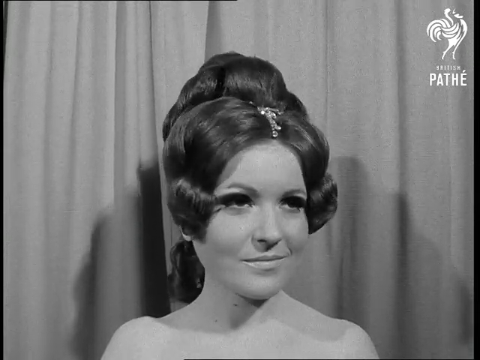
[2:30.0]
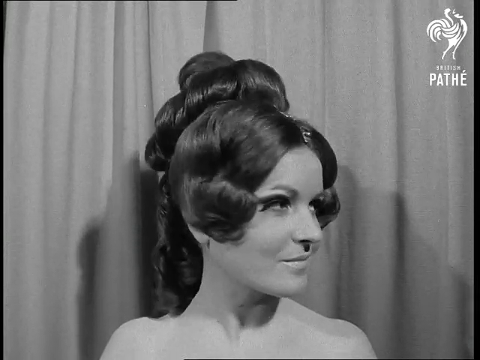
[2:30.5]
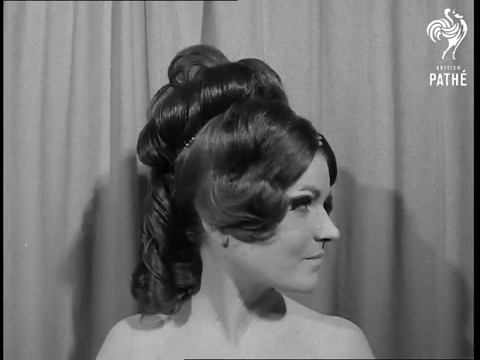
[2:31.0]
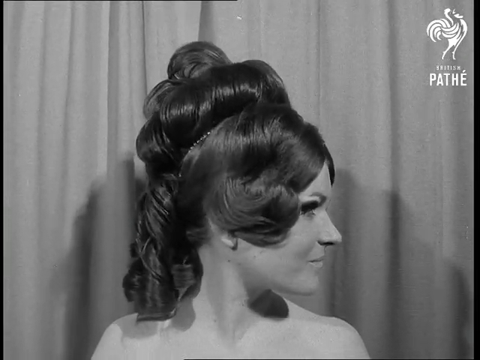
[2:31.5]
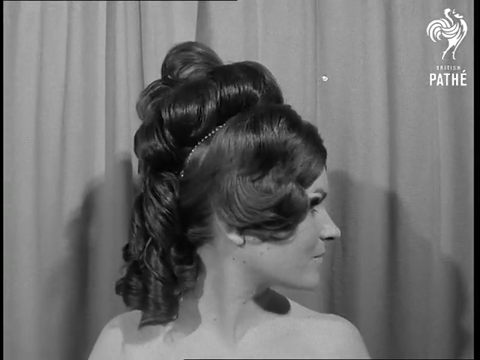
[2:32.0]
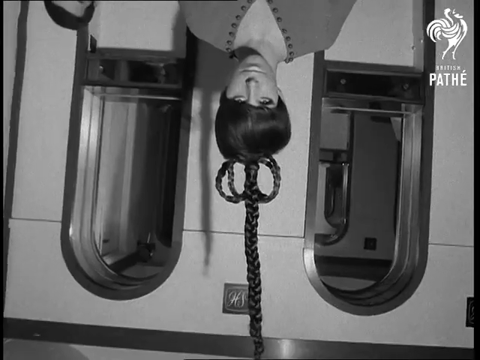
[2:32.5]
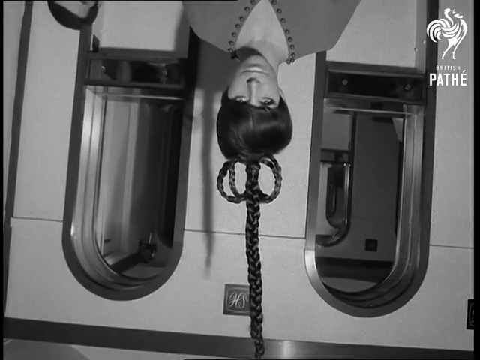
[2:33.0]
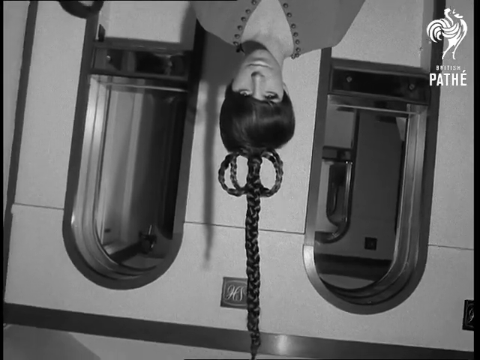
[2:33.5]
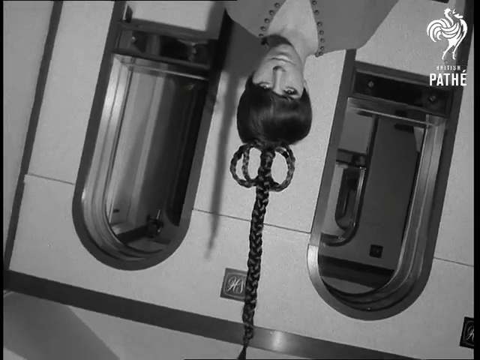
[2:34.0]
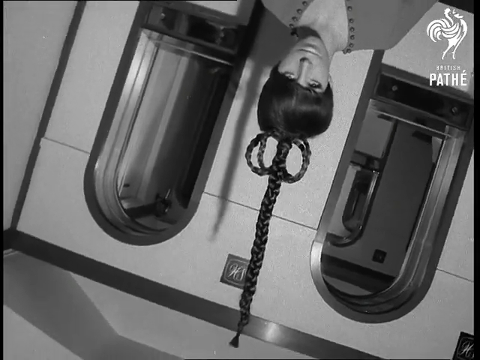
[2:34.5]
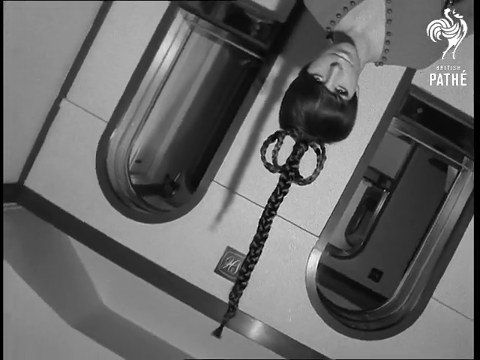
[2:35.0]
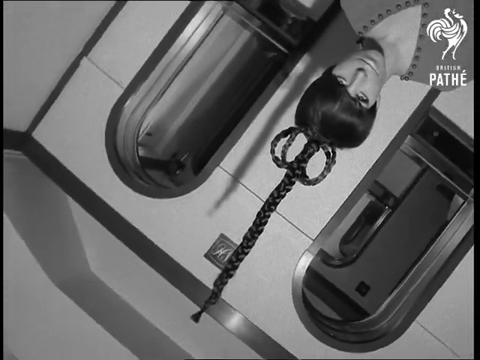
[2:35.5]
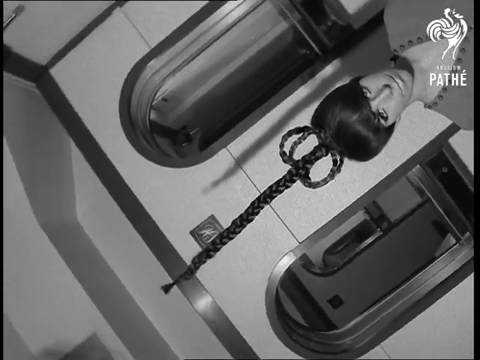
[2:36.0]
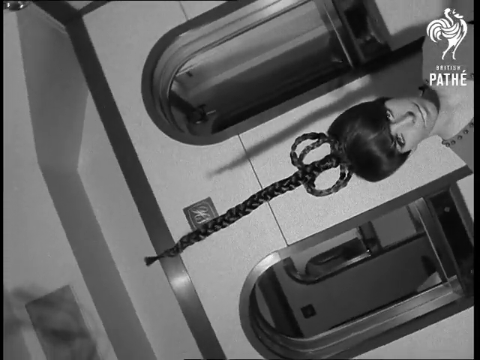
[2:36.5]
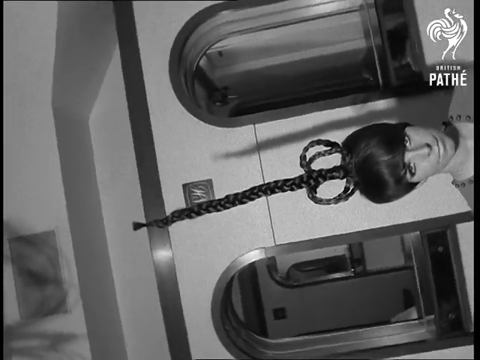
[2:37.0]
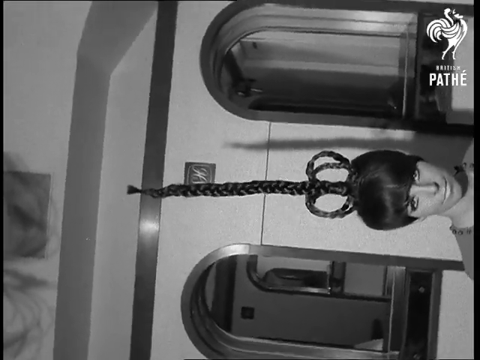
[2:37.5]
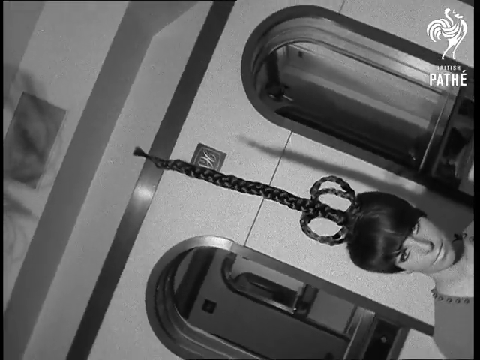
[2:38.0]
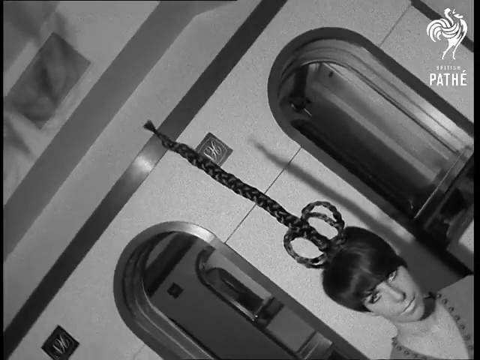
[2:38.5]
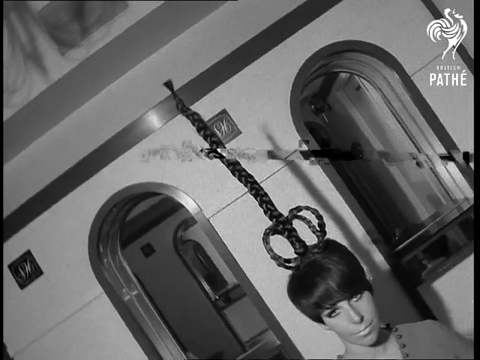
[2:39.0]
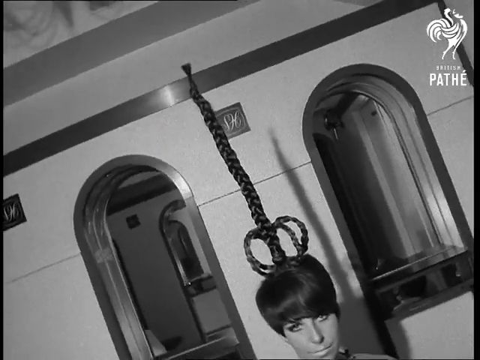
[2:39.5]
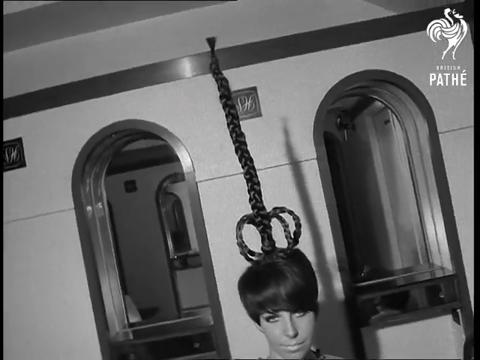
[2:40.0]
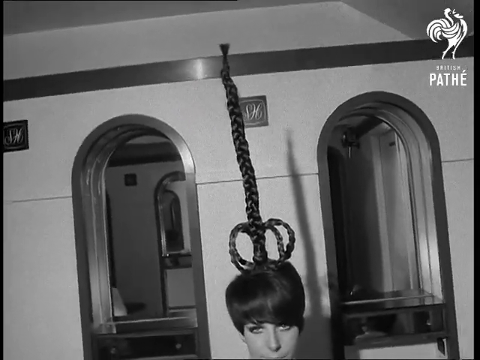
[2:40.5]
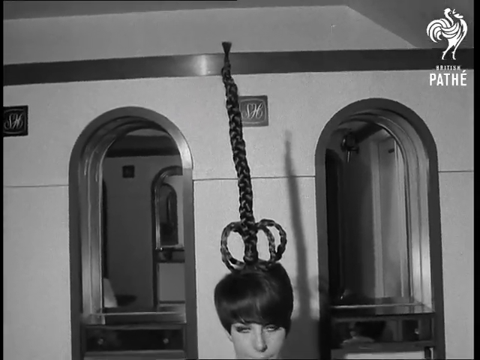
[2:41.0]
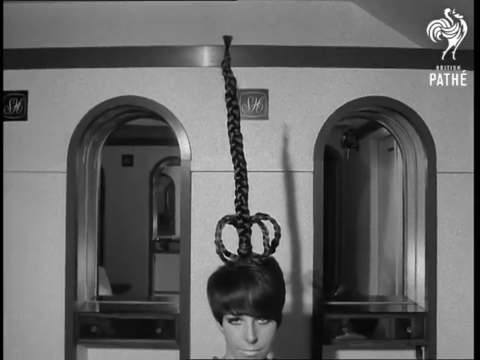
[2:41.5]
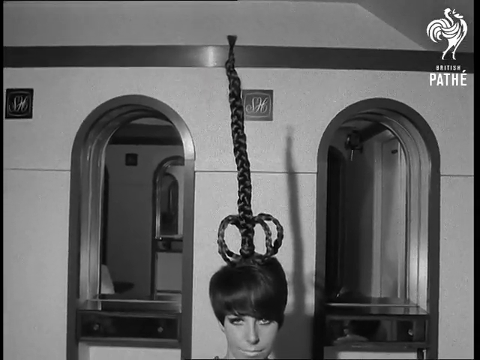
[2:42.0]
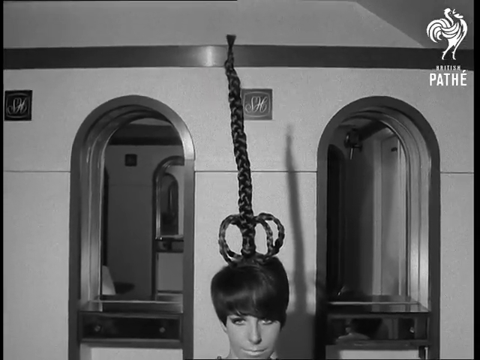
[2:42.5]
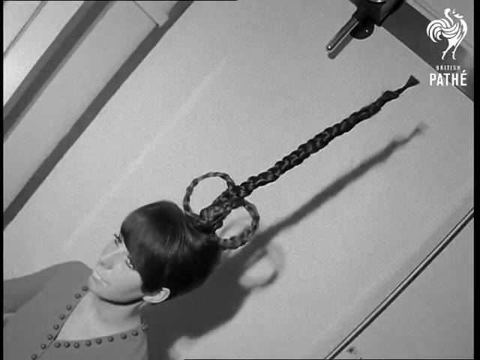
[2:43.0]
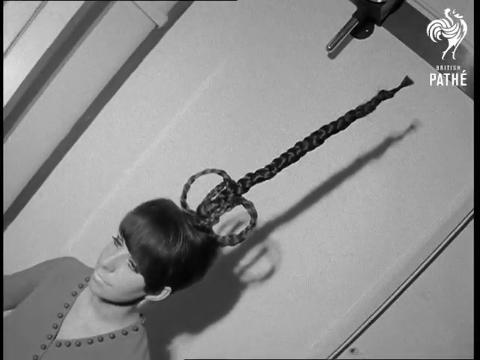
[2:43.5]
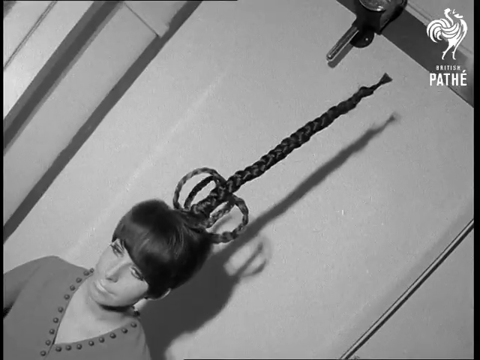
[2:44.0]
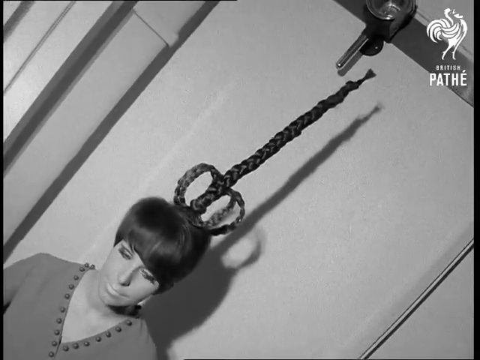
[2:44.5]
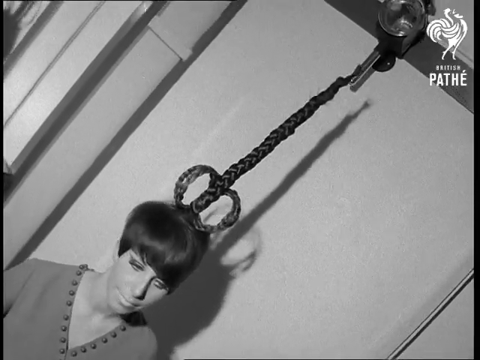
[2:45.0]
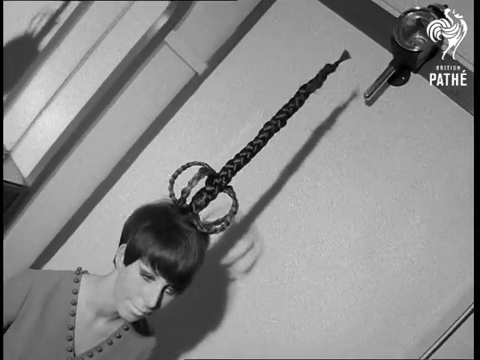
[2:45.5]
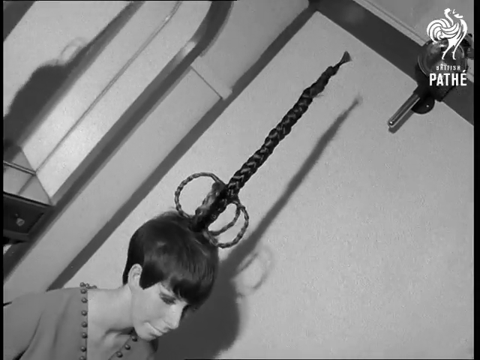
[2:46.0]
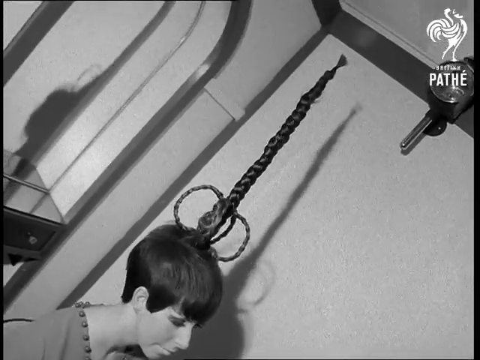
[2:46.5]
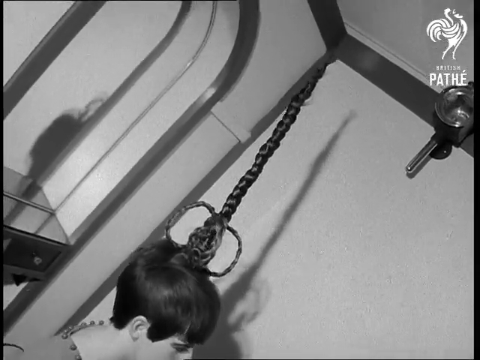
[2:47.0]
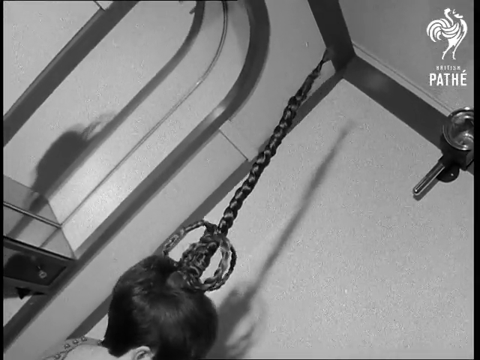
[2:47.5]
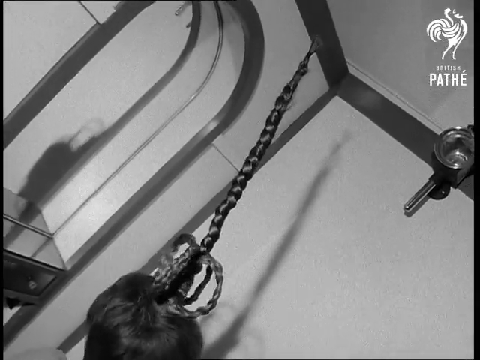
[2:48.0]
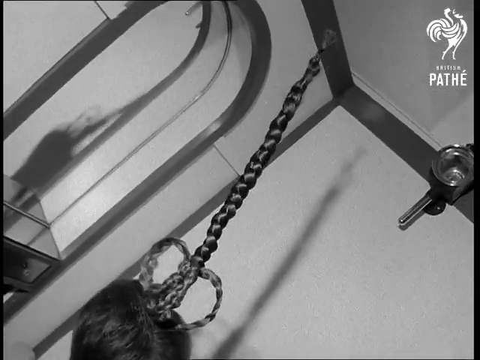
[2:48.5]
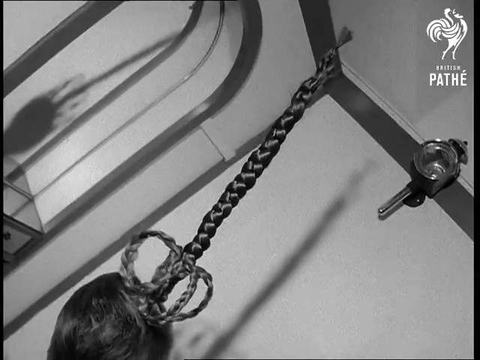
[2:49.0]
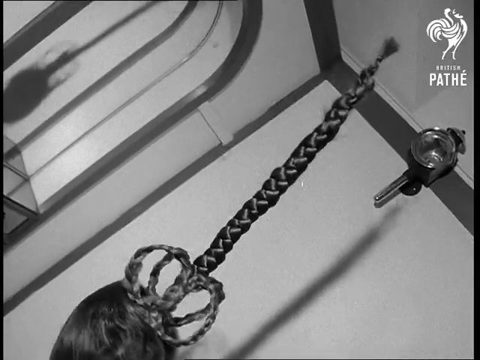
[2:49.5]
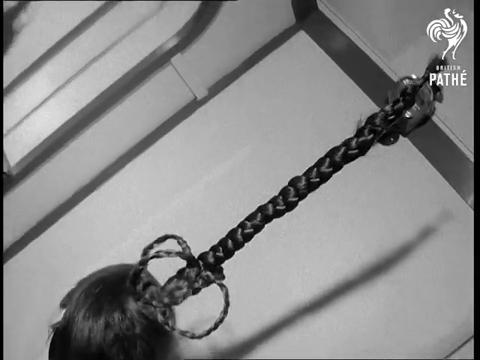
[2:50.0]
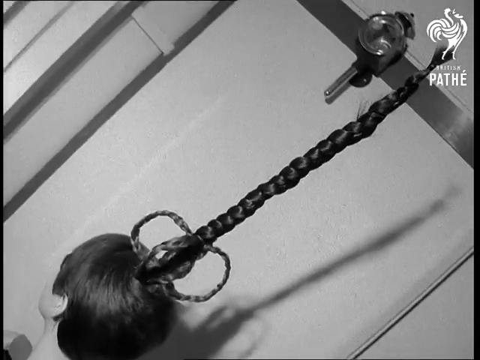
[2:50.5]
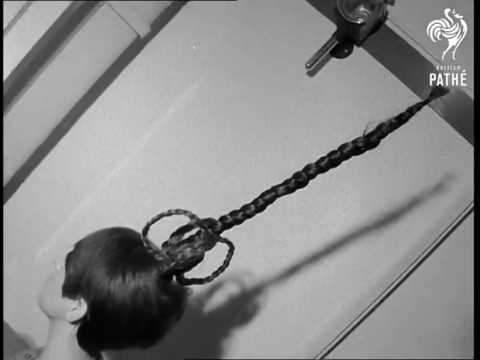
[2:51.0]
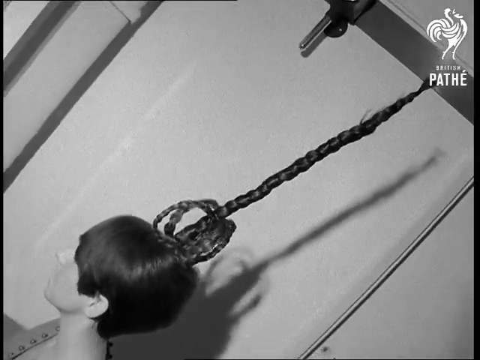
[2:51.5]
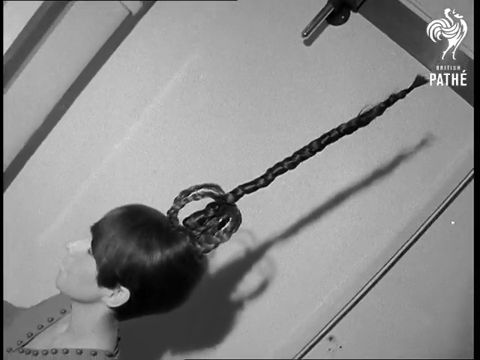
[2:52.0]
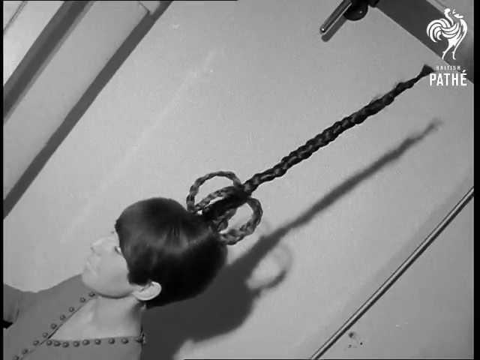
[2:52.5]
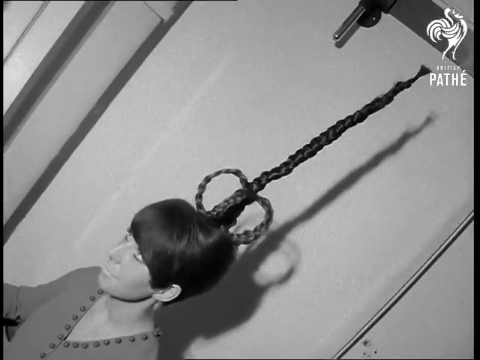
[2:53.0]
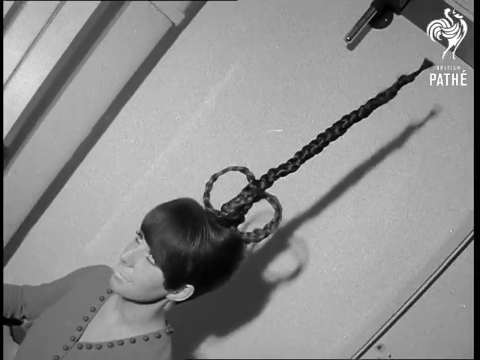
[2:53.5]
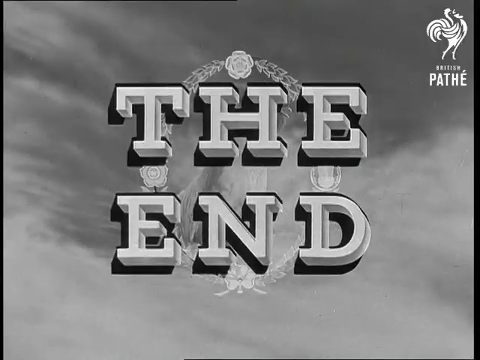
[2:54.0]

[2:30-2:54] The woman models her new dark, longer wig for the camera. A jewel has been placed in the center of the wig, which is curled around her face but split in the middle. She has a closed-mouth smile and very long eyelashes, and stands in front of a curtain. The image then turns upside down, showing a dark-haired woman, and the camera slowly turns back upright, revealing a very long, dark braid that looks like a sword. The woman wearing the braided sword wig has short dark hair with bangs, dark eyebrows, dark eyes and very long eyelashes, and wears a v-neck dress with bobbles around the neckline. She models the sword-like wig as the camera circles her.